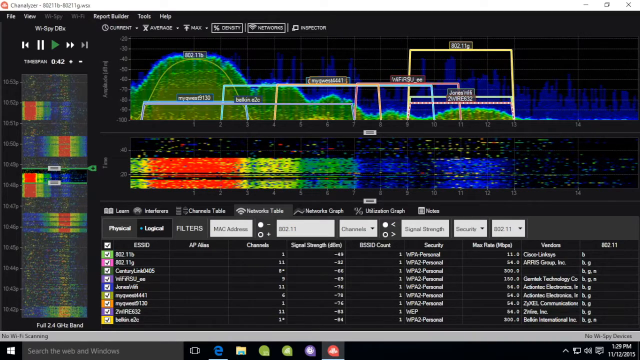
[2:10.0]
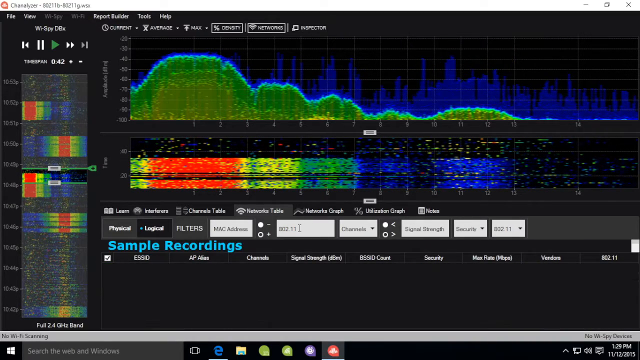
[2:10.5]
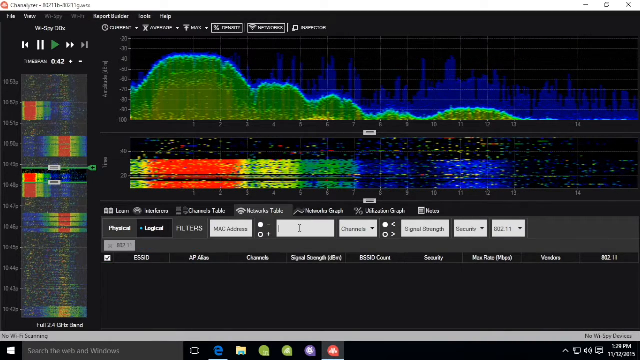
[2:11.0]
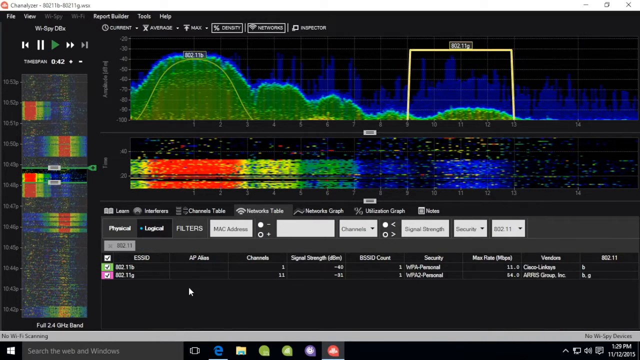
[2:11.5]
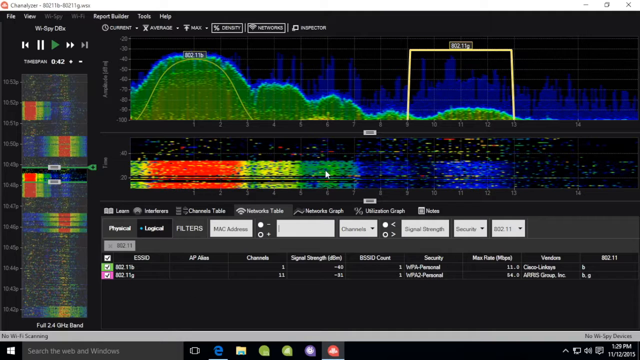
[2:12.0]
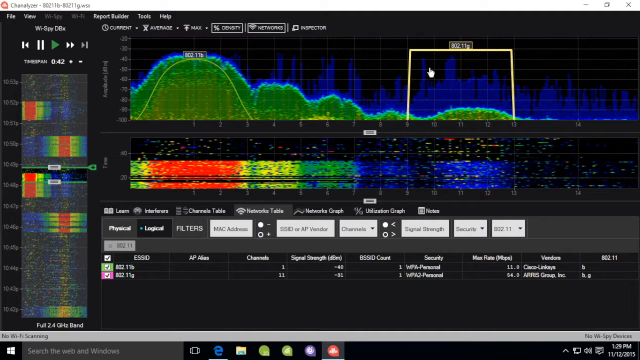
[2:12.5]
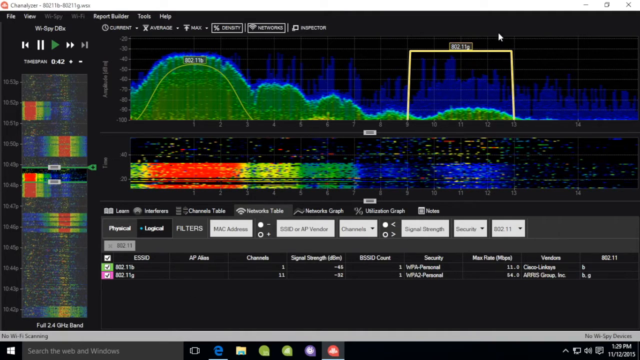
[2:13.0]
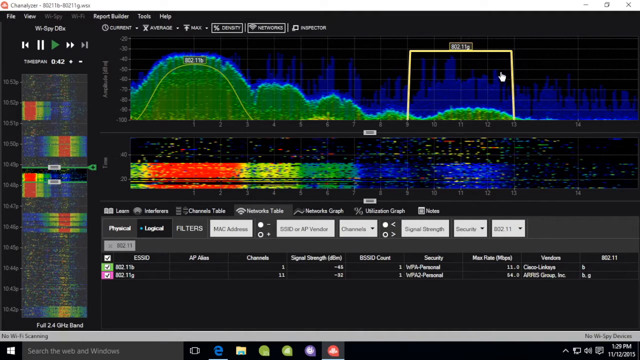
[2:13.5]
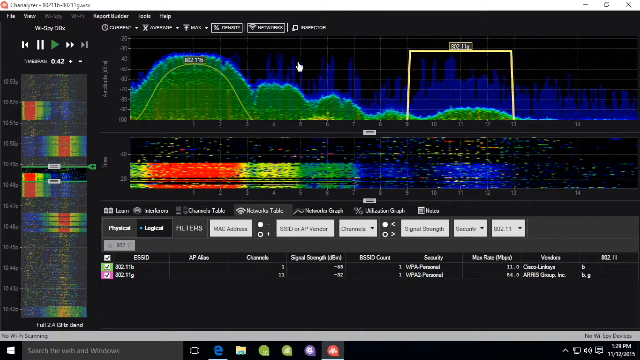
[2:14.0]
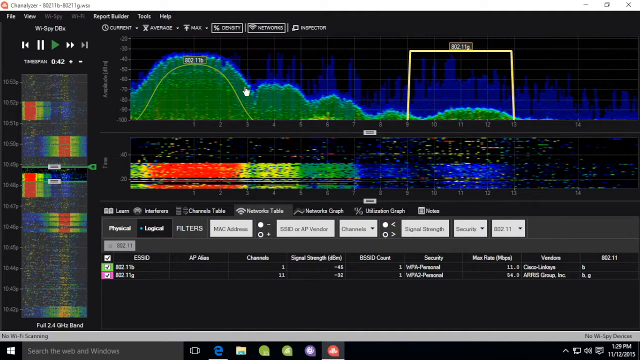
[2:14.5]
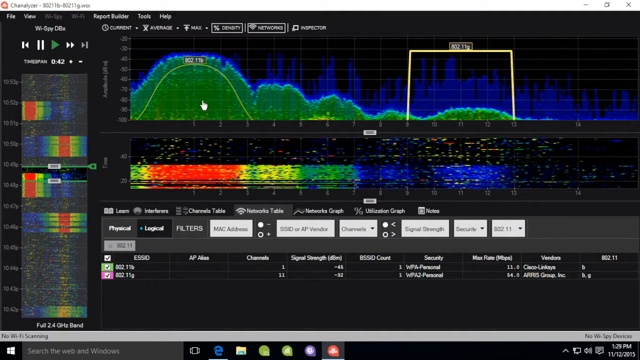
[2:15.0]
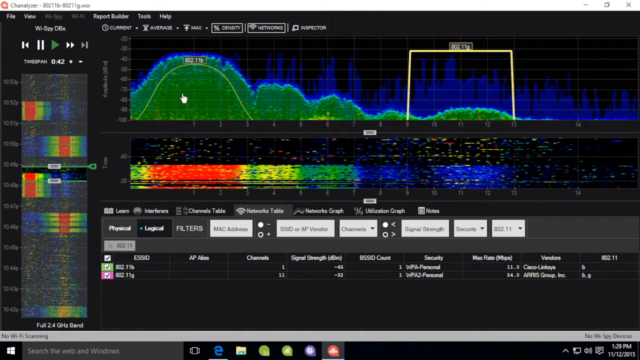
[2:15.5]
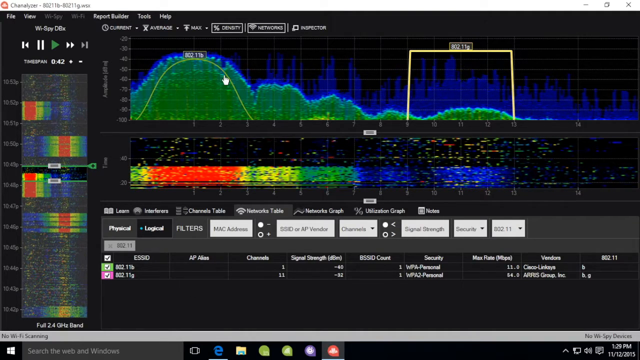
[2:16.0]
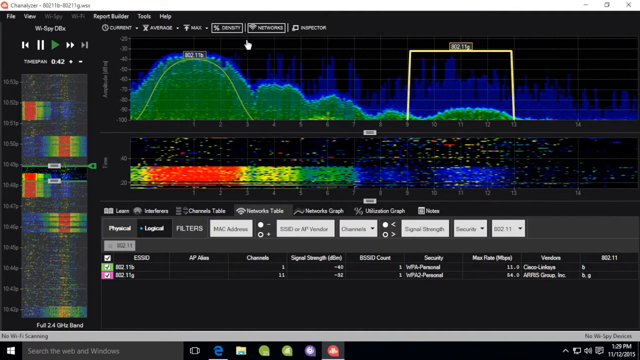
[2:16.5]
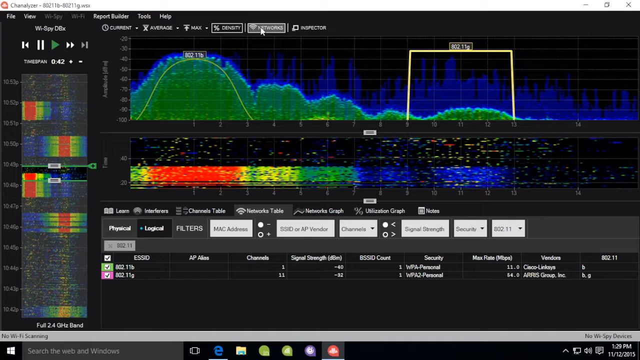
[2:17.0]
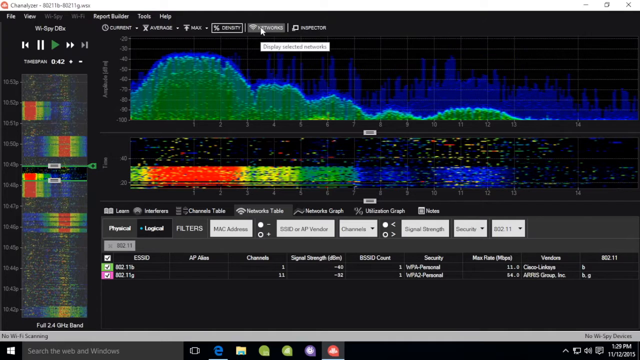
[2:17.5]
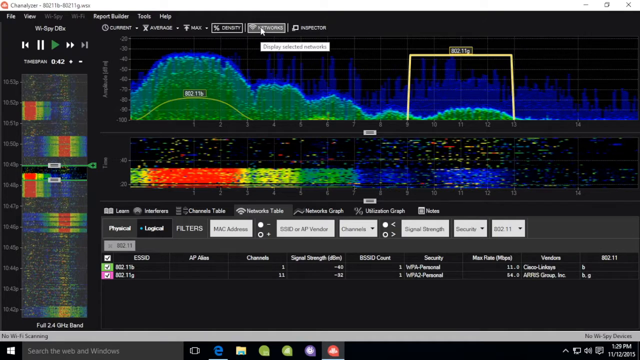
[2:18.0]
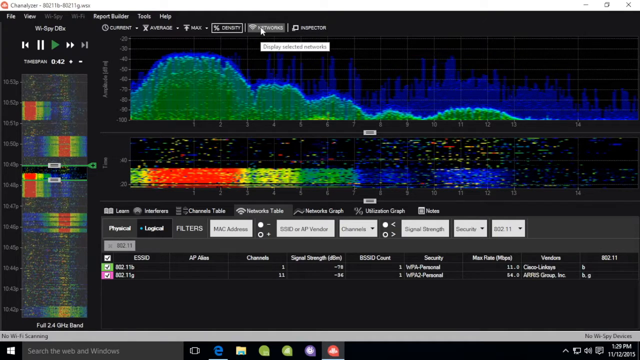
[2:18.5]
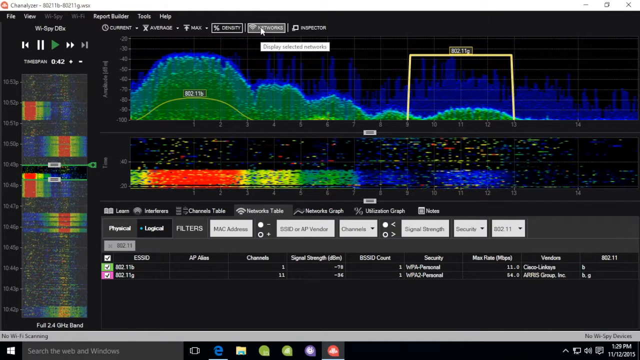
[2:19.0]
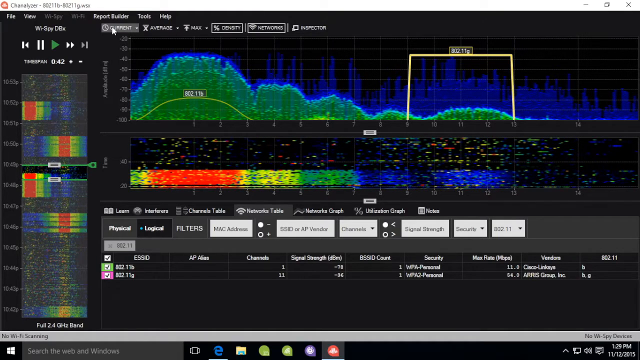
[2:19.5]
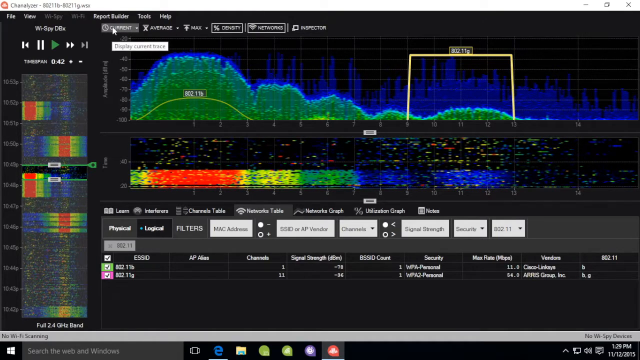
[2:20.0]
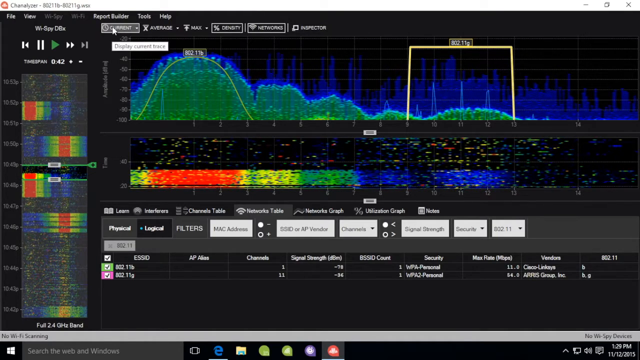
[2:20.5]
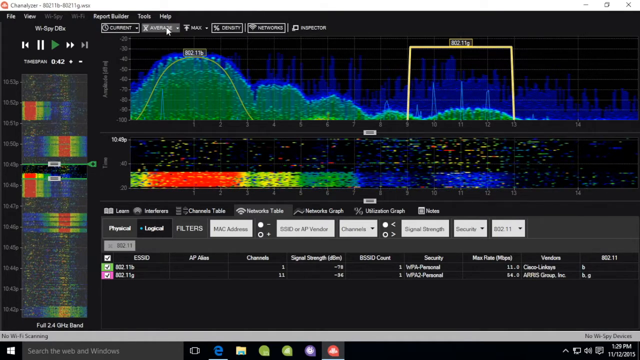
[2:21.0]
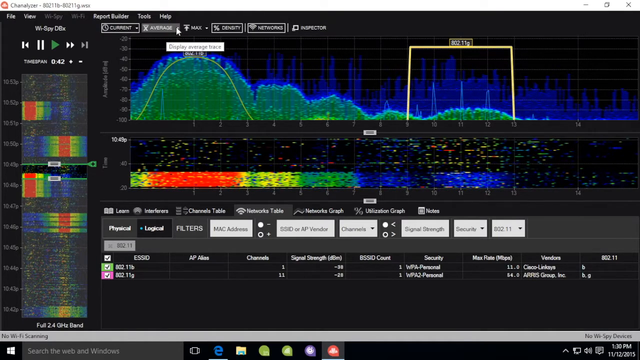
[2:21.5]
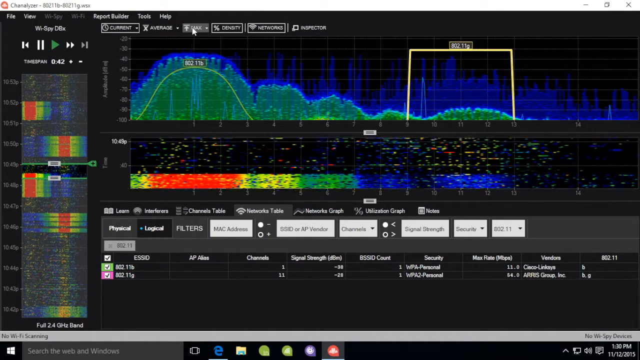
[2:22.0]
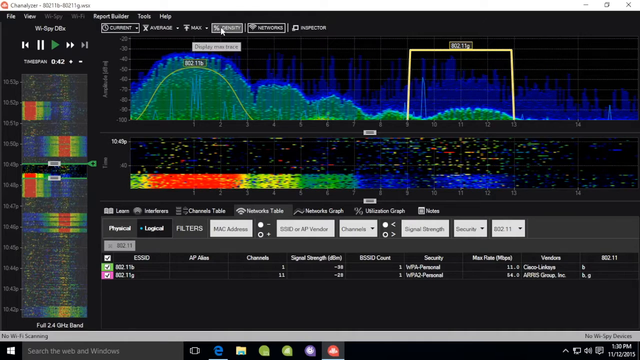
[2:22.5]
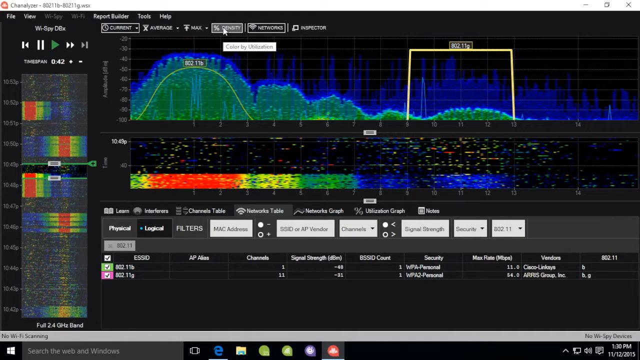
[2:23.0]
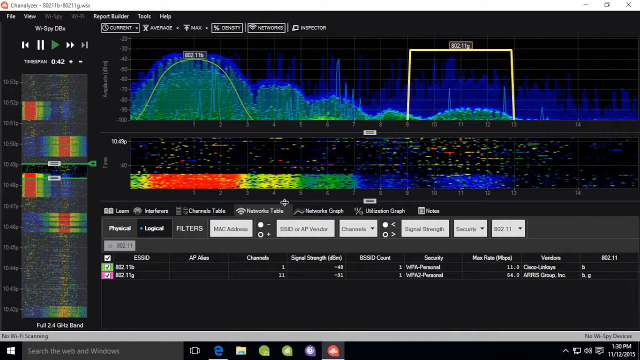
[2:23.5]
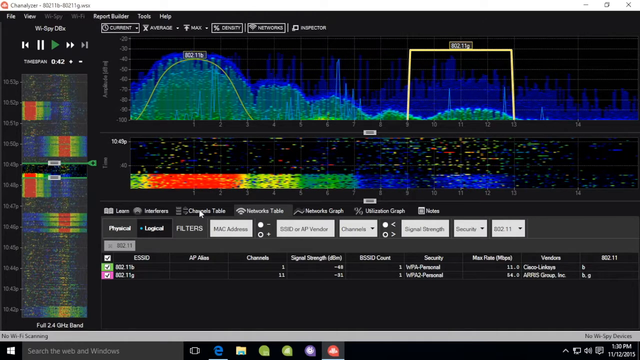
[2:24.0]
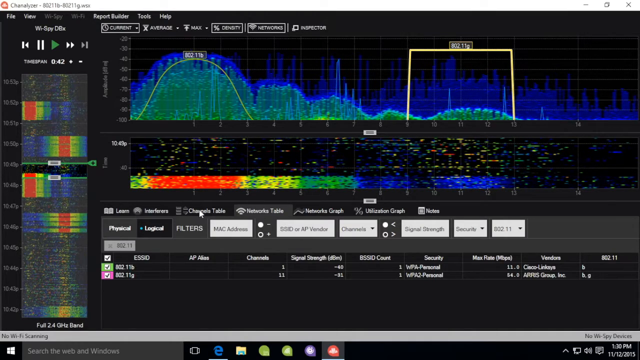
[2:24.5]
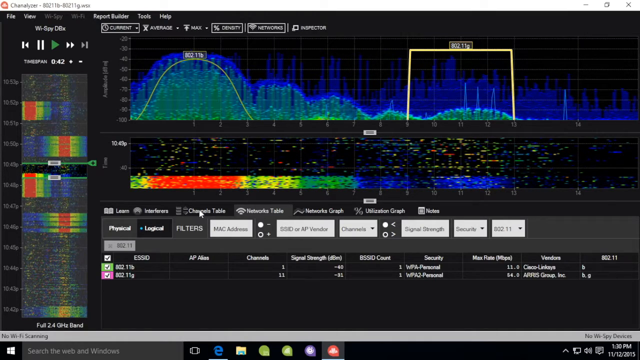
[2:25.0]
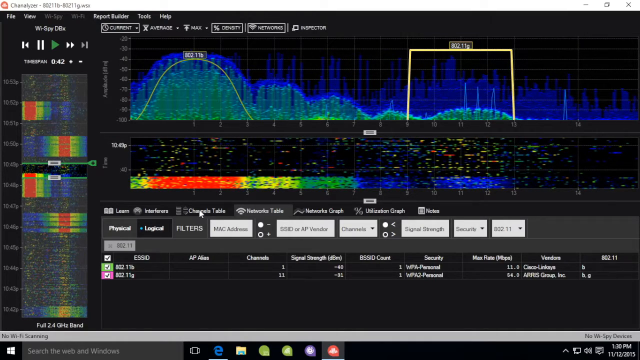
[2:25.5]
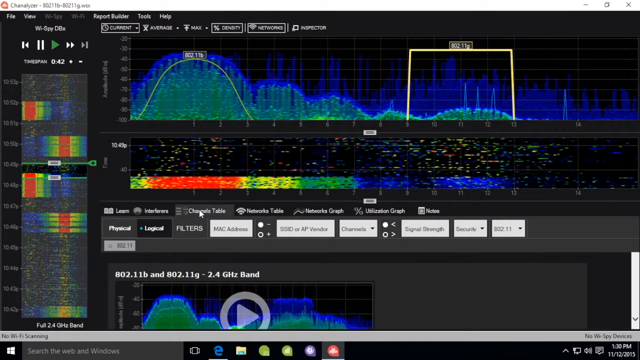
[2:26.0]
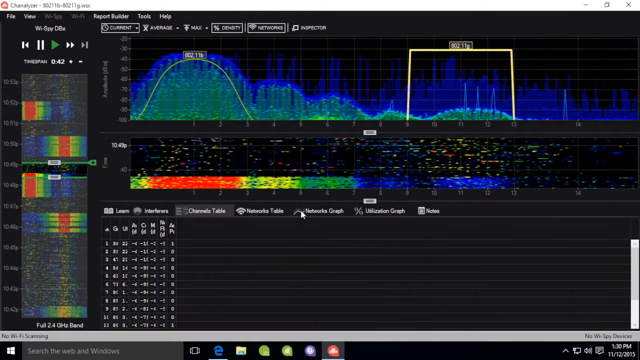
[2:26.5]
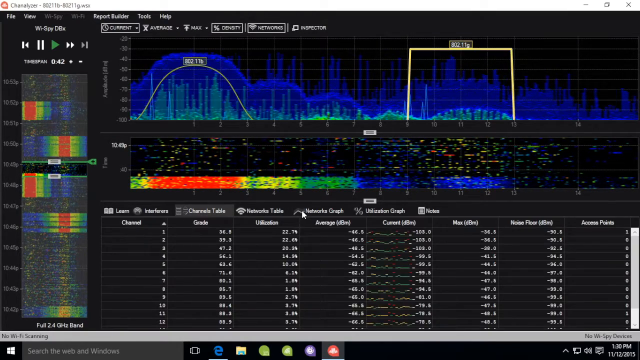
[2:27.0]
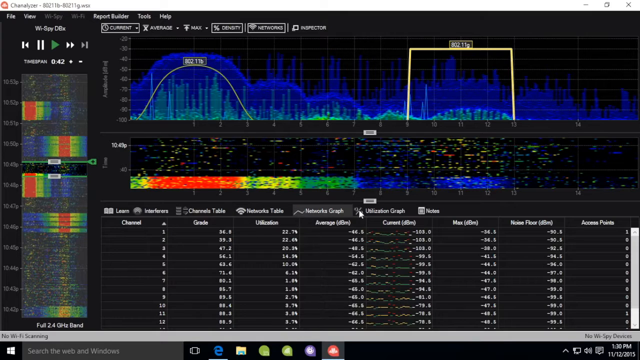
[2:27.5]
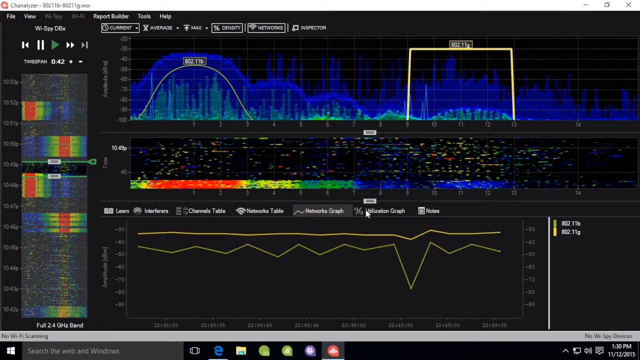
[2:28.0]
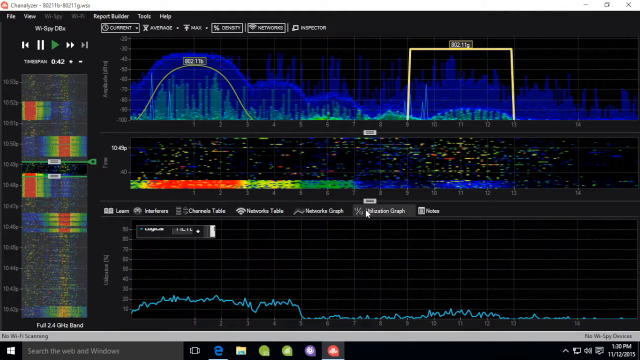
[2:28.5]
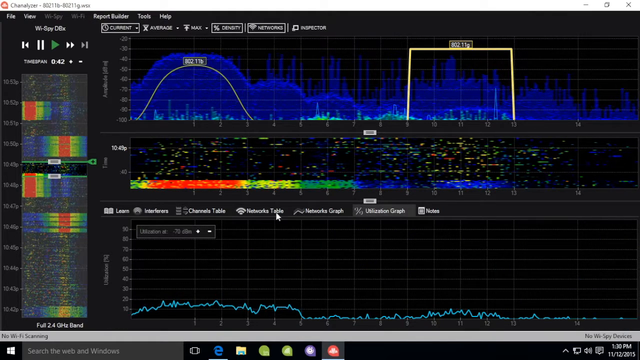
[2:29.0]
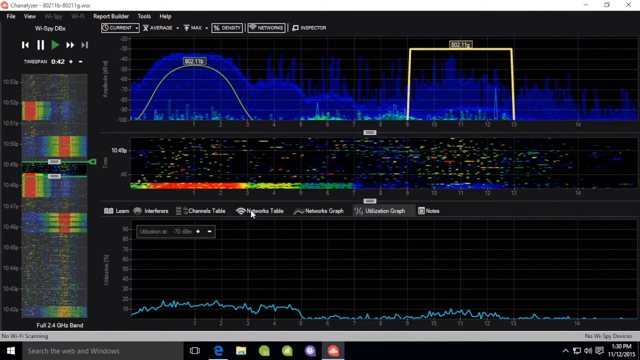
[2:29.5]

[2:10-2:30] The app shows tabs for current, average, max, density and networks, along with a channels table, a networks table, a networks graph and a percentage of utilization graph. There is also a place for notes. The networks available can be filtered by fields such as MAC address, channels and signal strength, and sorted by alphabetical order, channel, frequency and signal strength.